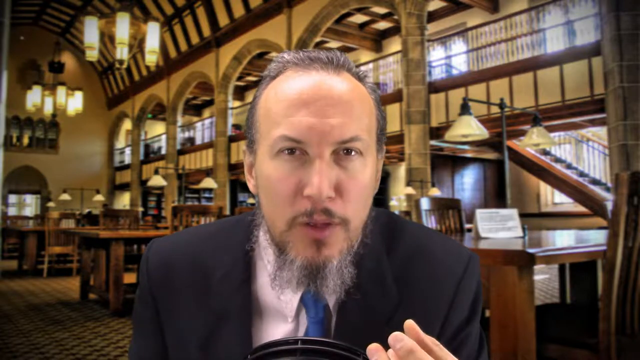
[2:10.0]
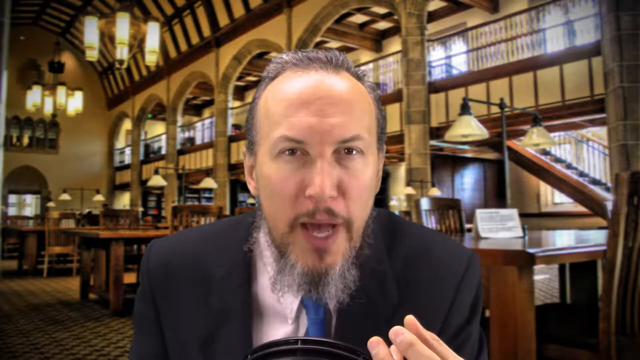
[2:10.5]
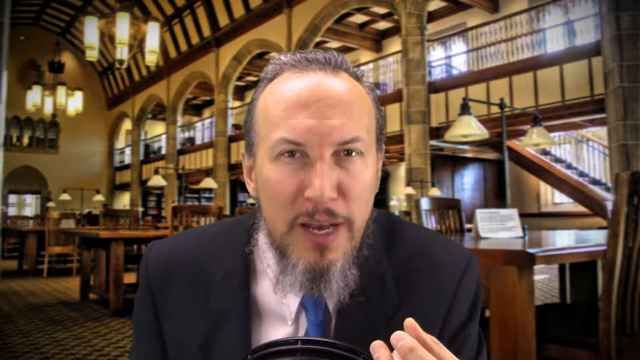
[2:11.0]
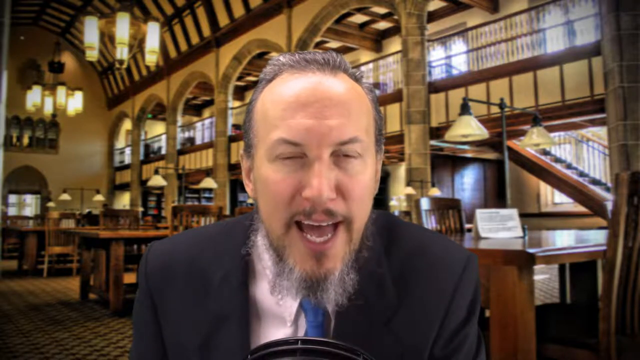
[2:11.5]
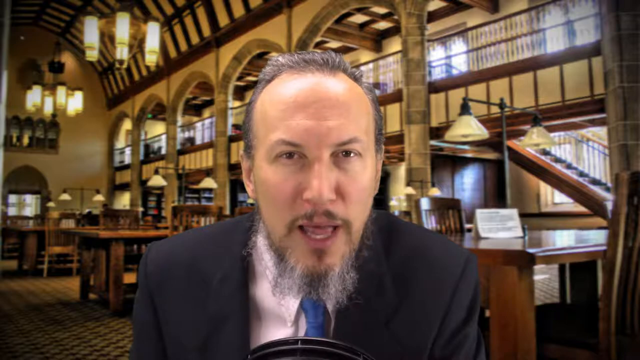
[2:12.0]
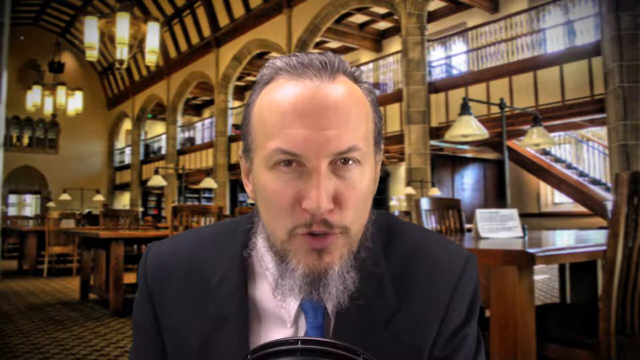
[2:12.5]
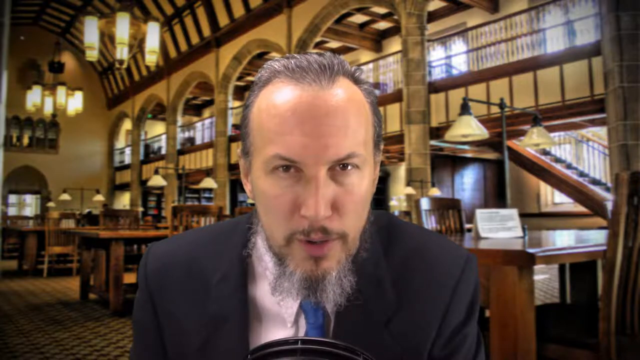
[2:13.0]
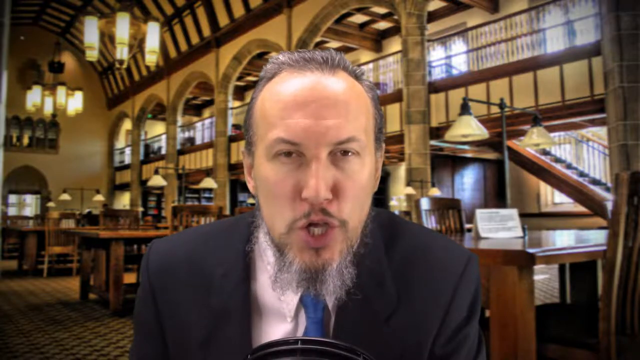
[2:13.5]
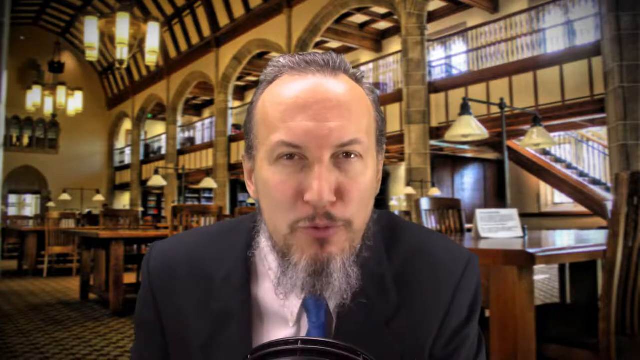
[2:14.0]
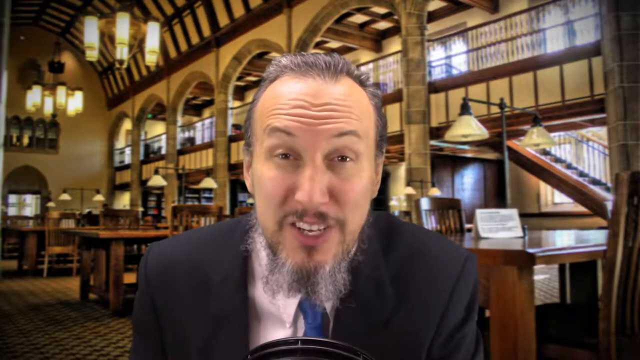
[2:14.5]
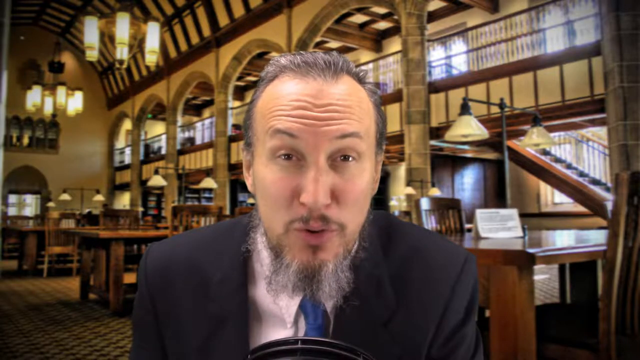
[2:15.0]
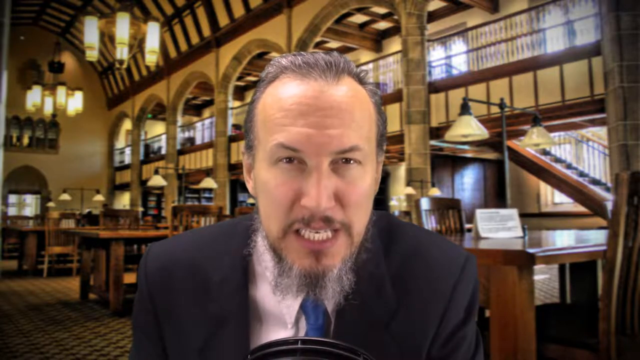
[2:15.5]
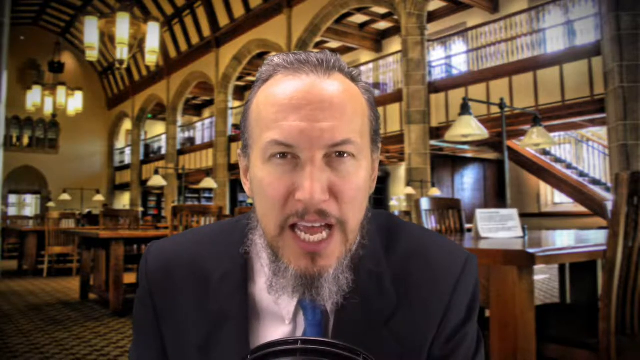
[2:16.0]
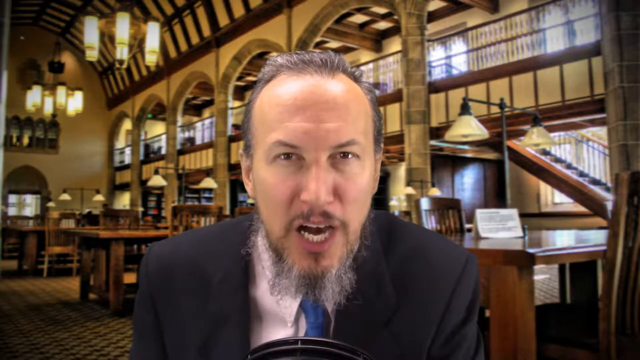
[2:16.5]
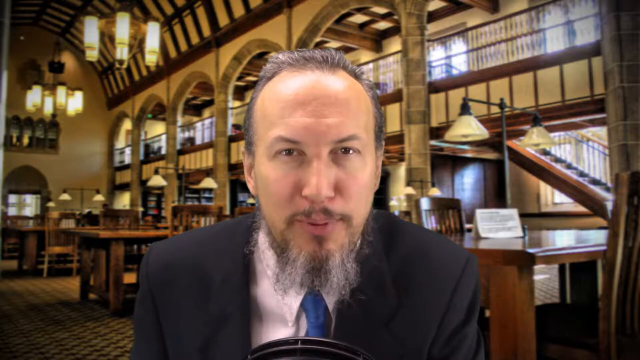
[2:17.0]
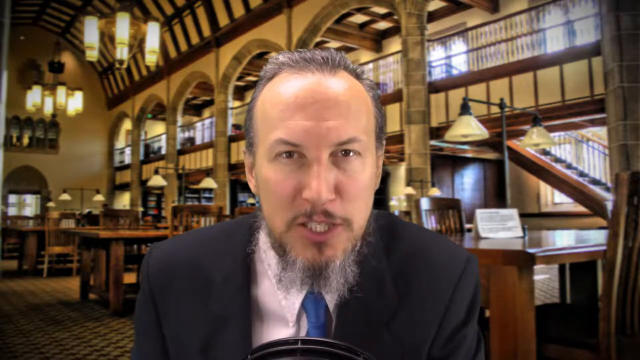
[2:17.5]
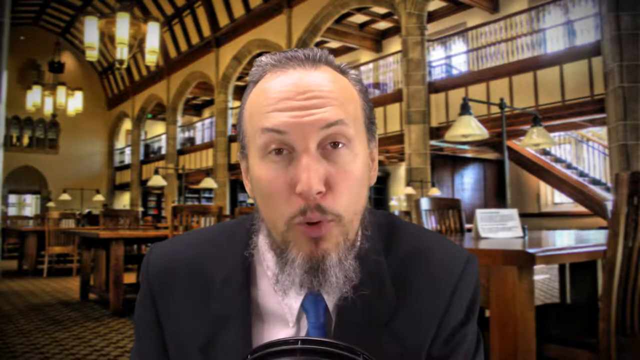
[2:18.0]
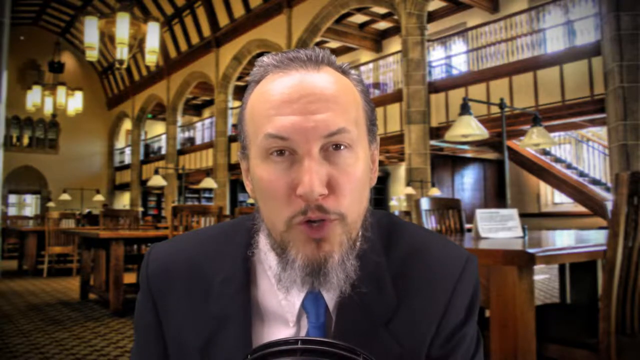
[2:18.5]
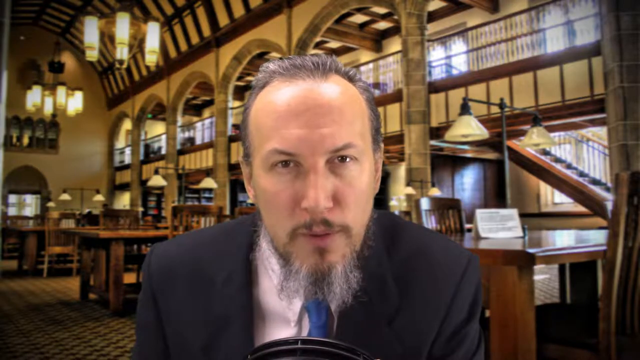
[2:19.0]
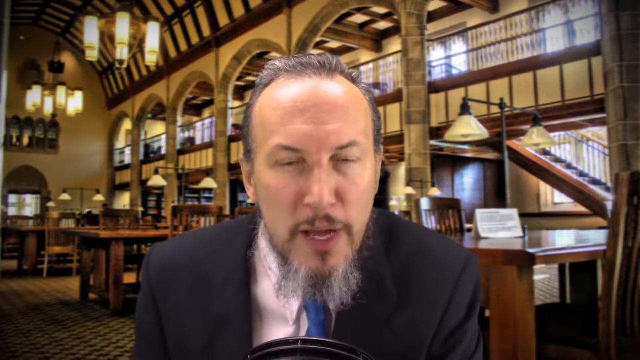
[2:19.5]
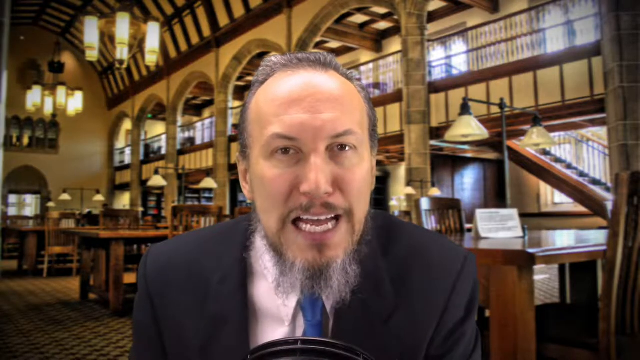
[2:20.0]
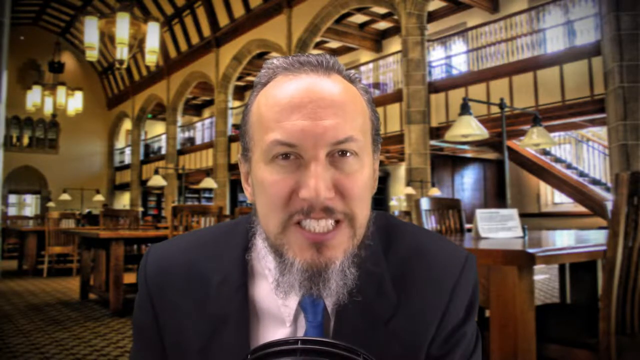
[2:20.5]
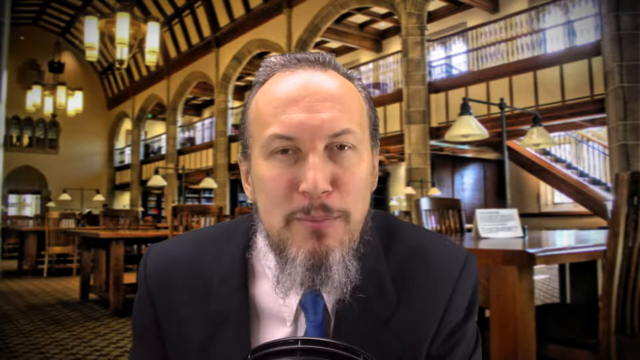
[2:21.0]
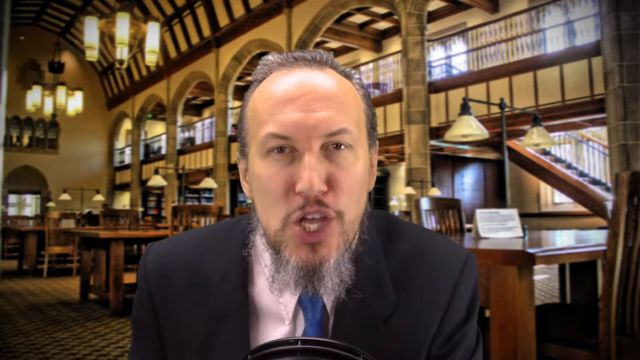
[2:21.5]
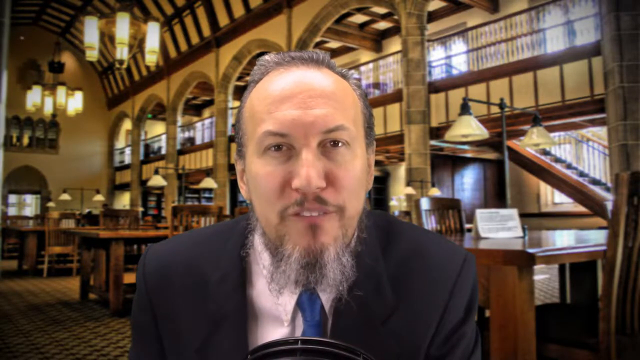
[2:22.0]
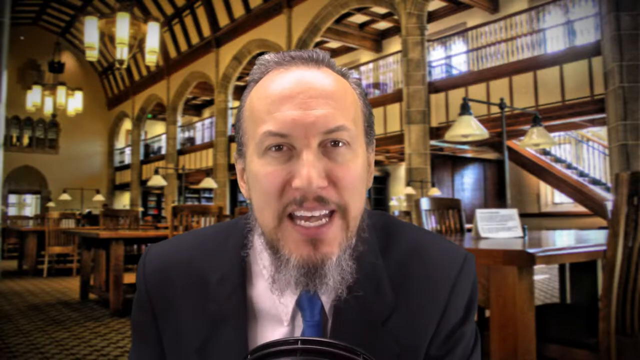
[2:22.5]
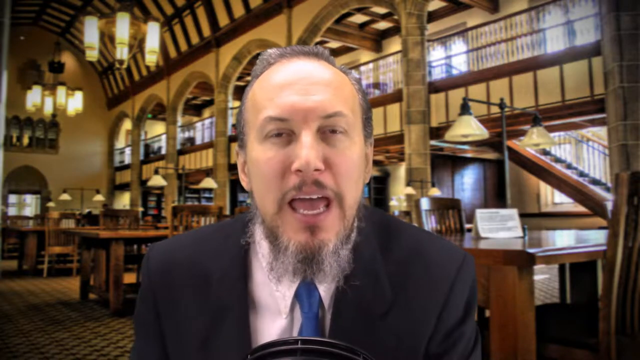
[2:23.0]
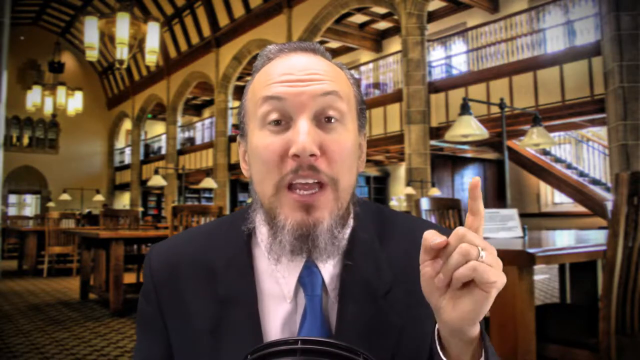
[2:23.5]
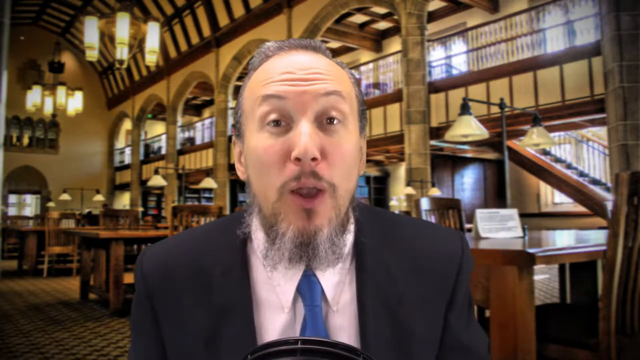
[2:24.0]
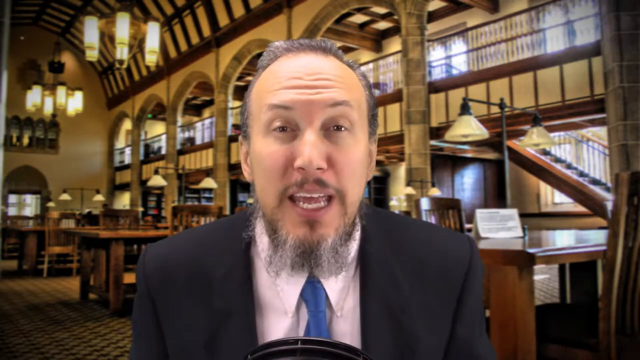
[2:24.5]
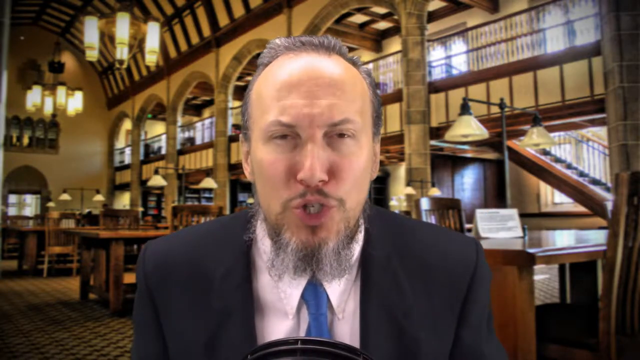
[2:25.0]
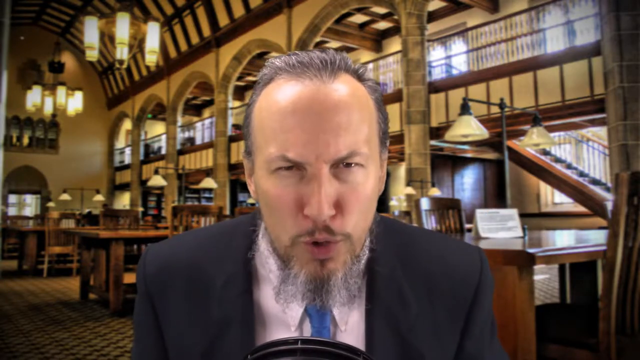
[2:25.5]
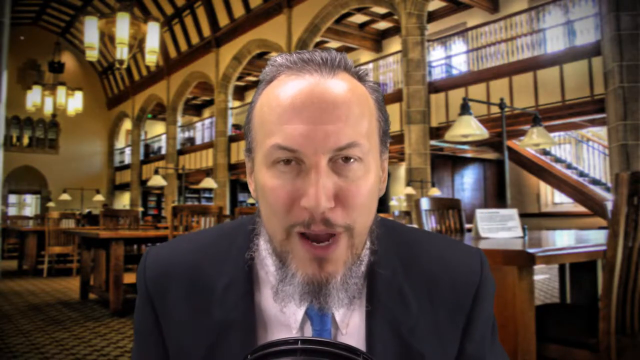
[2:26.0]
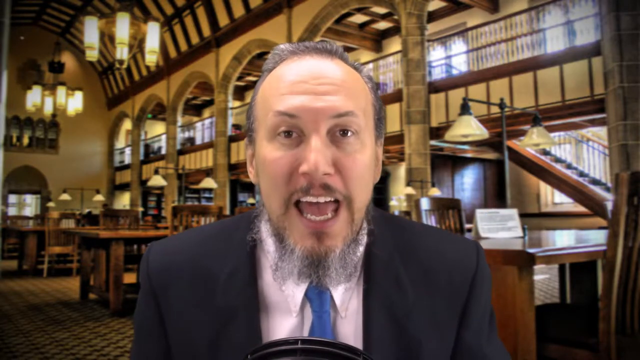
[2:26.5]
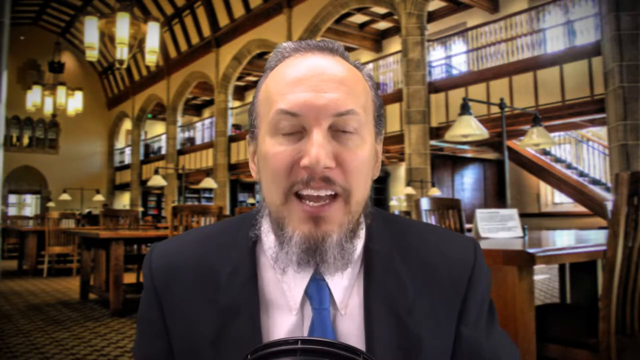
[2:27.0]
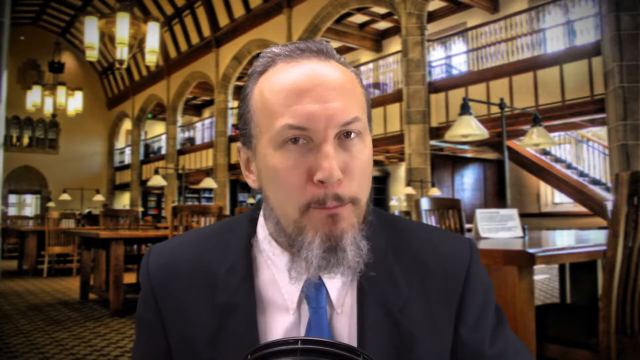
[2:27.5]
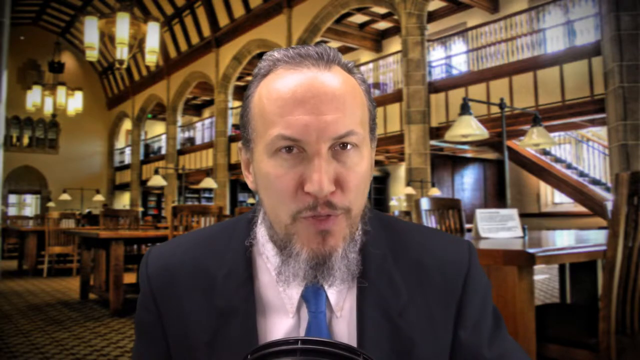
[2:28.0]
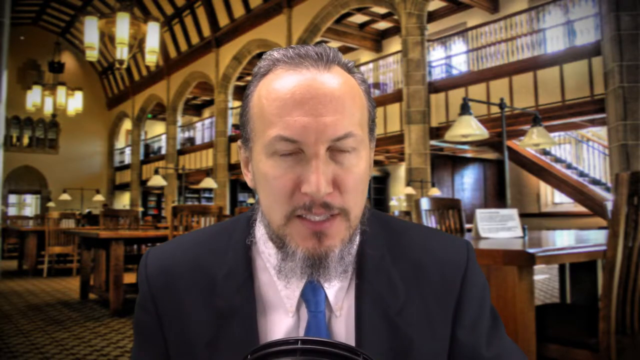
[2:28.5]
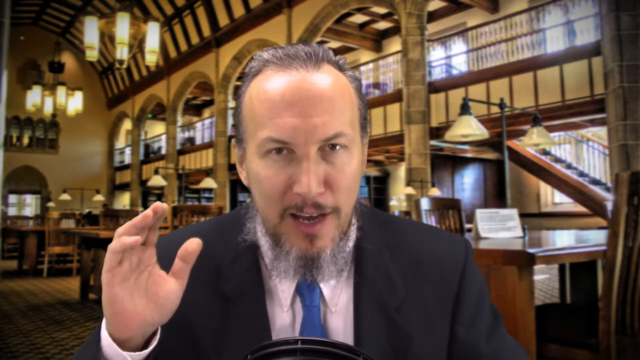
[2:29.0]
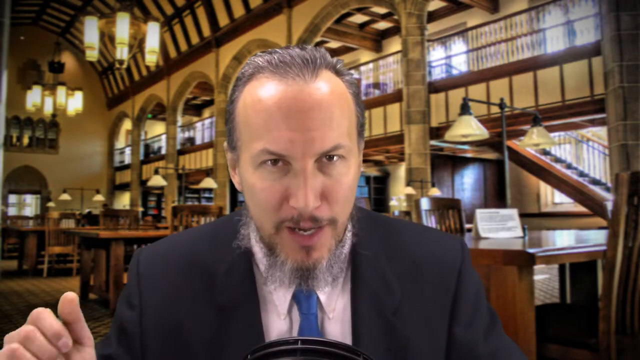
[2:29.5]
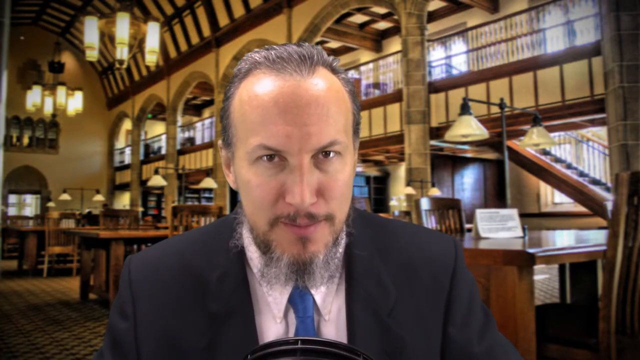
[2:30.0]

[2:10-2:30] A Caucasian man with dark brown, almond-shaped eyes, fair skin and a salt-and-pepper goatee and beard is shown; the beard is quite scraggly, untamed and primarily gray. Behind him is a grand two-story library that looks set up for academia, with a row of brown, dark cherry wood rectangular tables with matching spindle chairs. Many retro-style lights dangle from the ceiling, and there are lights to the right of each table. As the man speaks, his expressions change often, and he looks almost frustrated in wanting to get his points across to the viewer. He raises his eyebrows, crinkles his forehead and bares his quite straight, white top and bottom teeth. As he goes from almost a grin that is not quite a smile to a very intense squeezing of his eyebrows together, his right hand comes up and almost gives a wave.